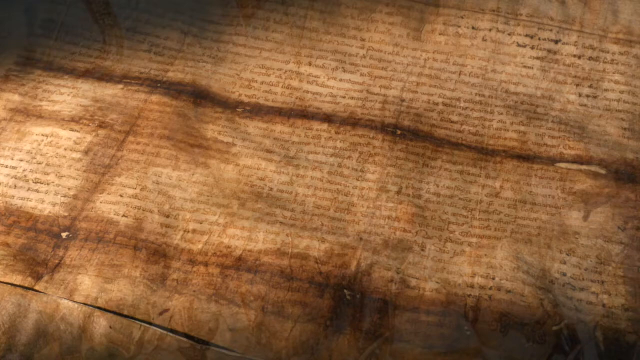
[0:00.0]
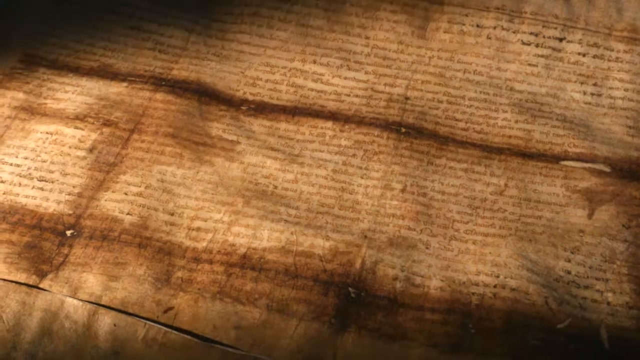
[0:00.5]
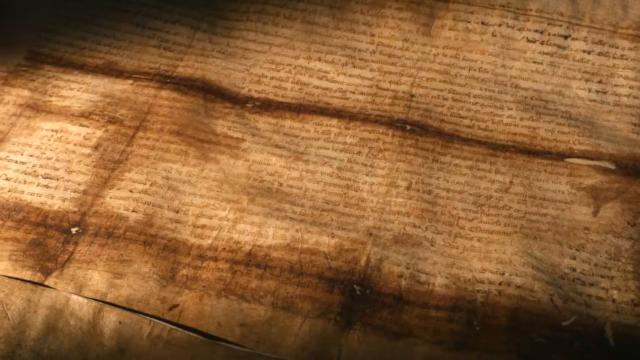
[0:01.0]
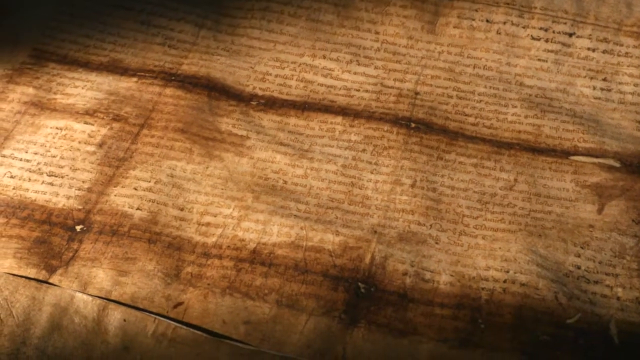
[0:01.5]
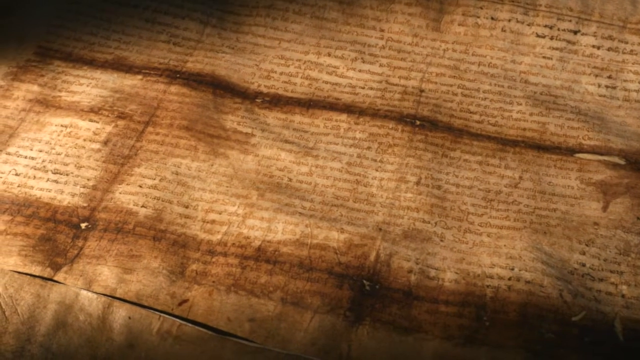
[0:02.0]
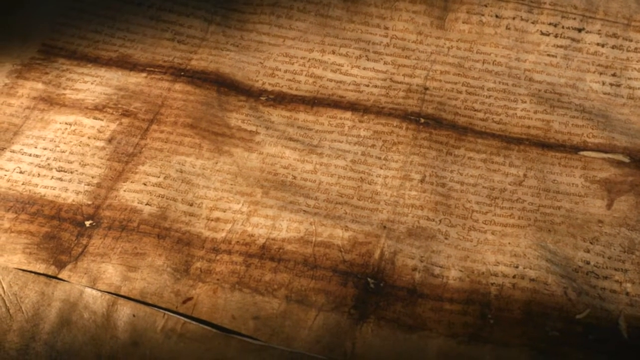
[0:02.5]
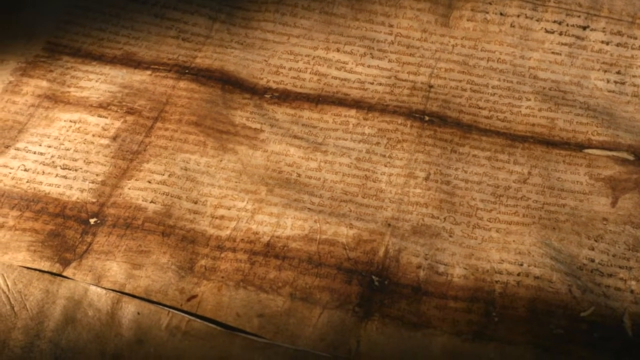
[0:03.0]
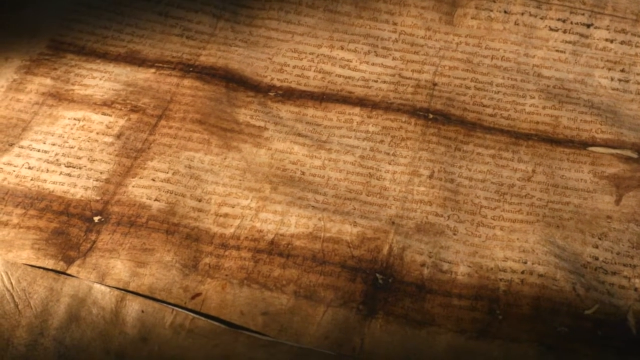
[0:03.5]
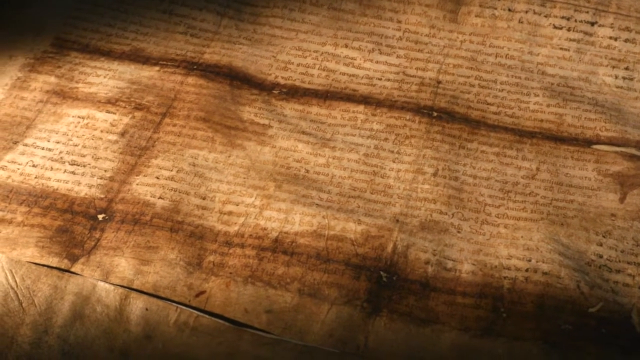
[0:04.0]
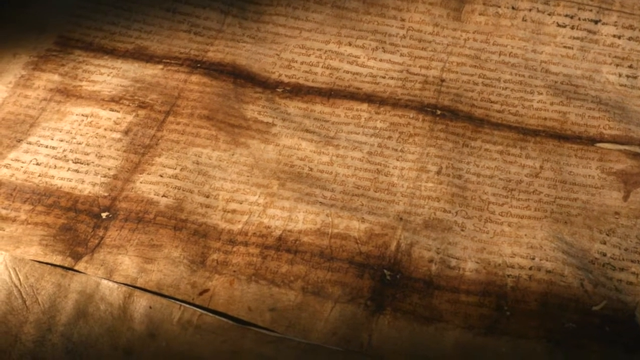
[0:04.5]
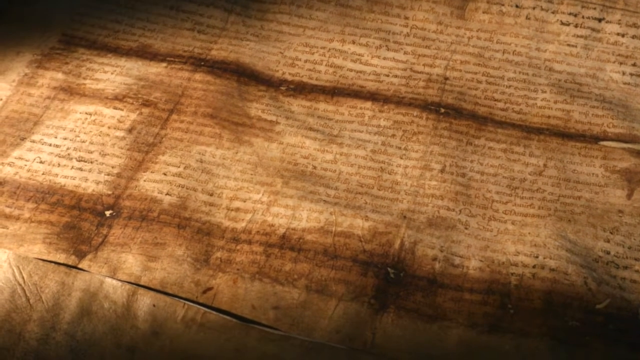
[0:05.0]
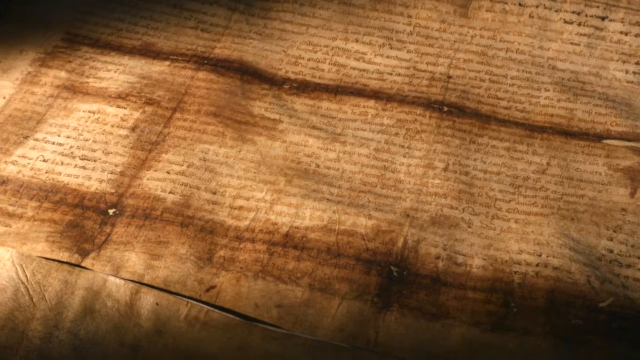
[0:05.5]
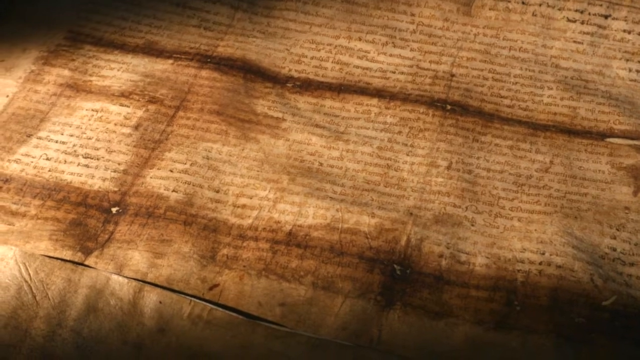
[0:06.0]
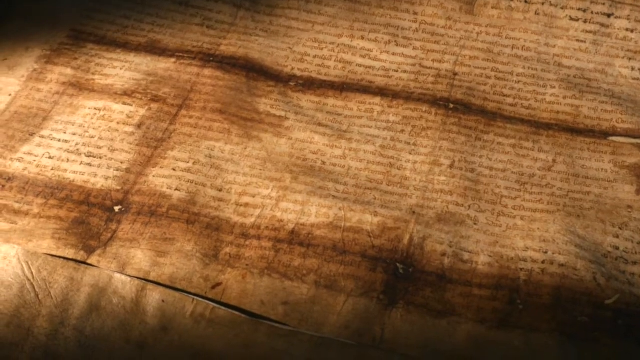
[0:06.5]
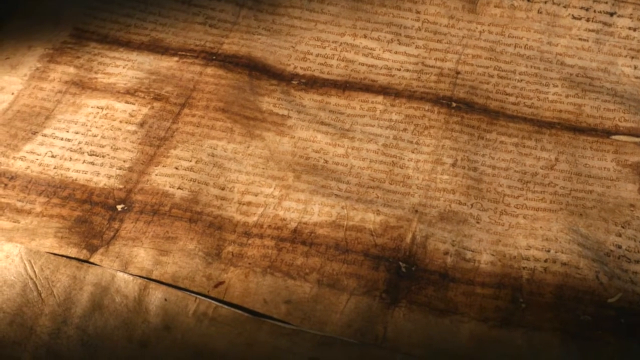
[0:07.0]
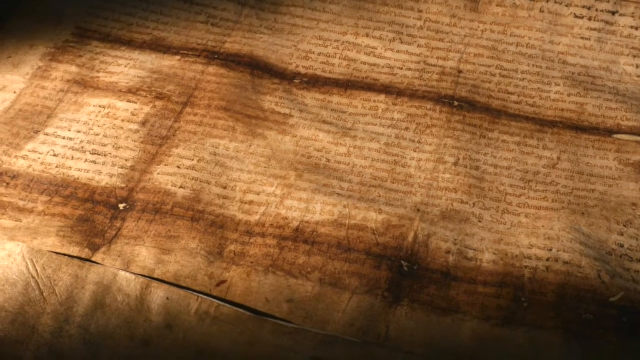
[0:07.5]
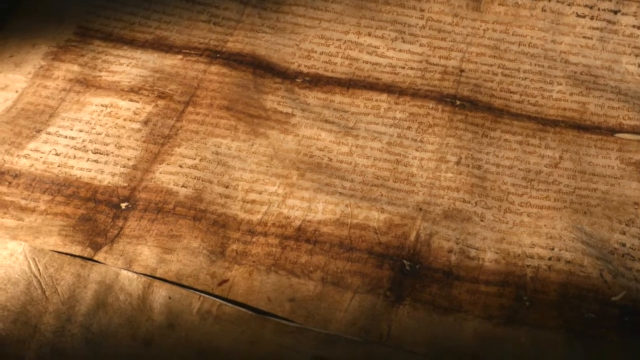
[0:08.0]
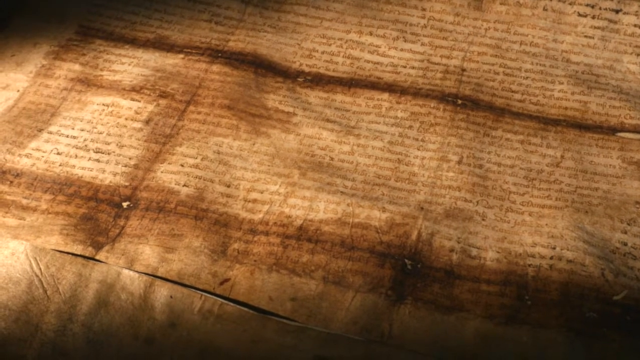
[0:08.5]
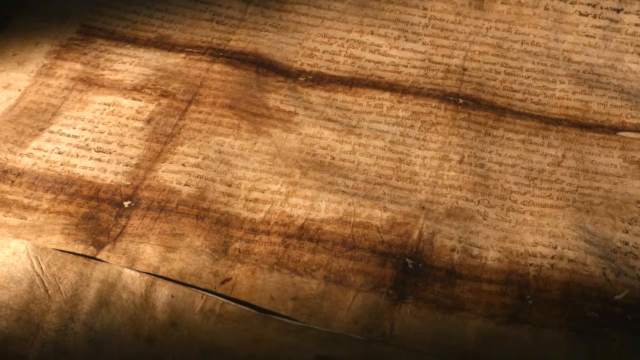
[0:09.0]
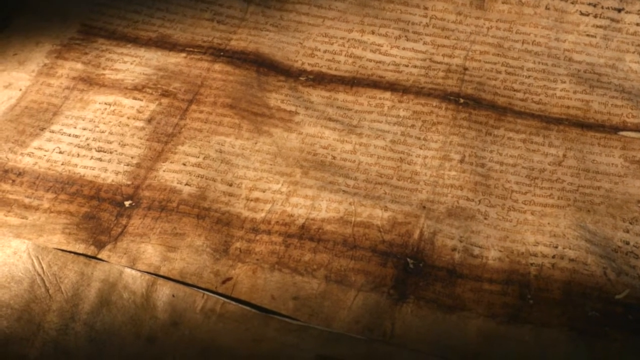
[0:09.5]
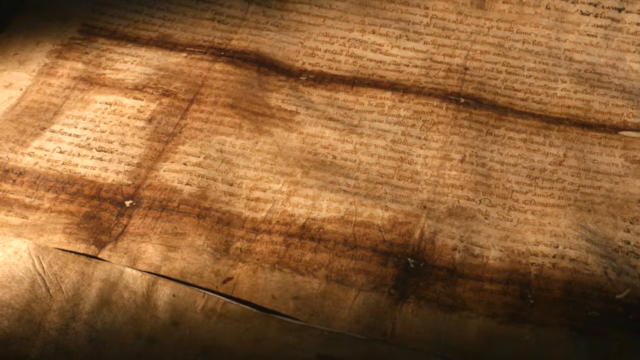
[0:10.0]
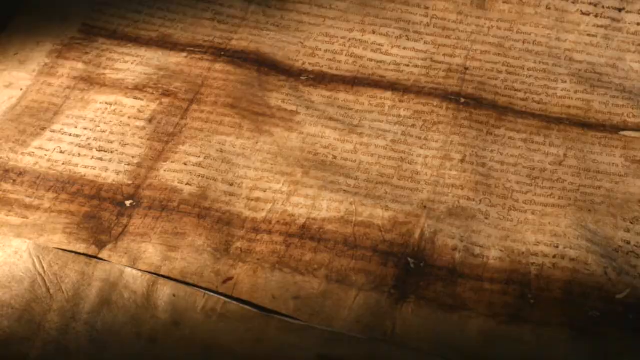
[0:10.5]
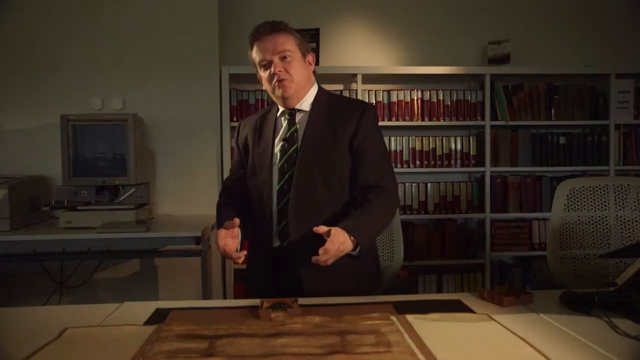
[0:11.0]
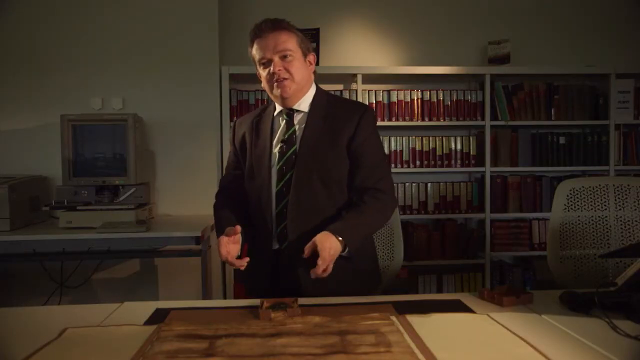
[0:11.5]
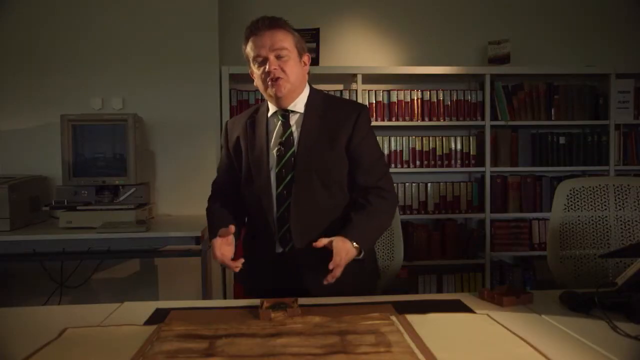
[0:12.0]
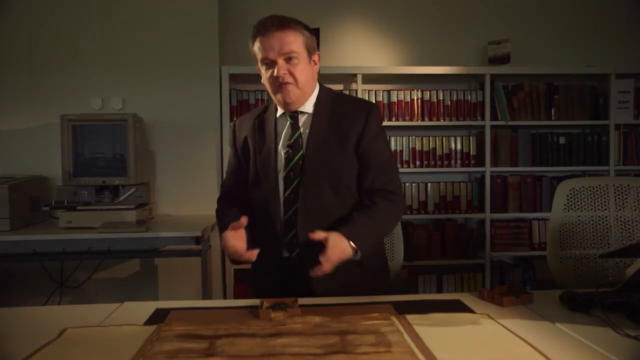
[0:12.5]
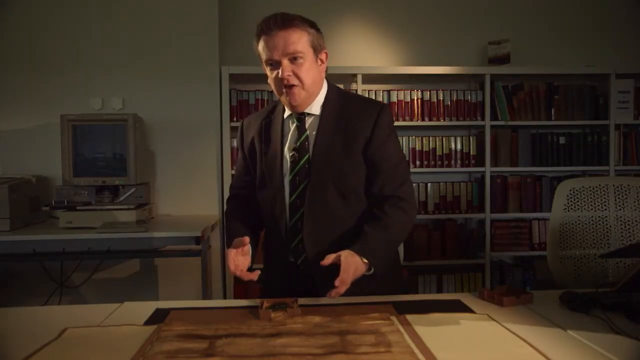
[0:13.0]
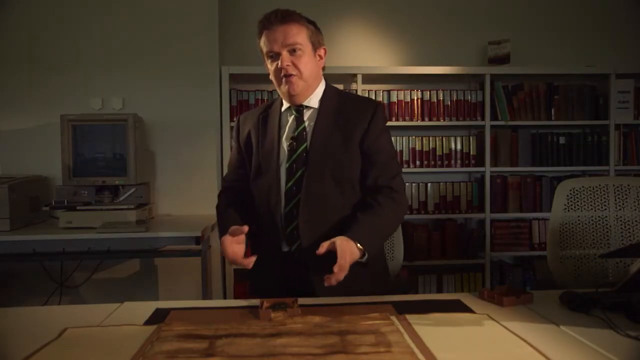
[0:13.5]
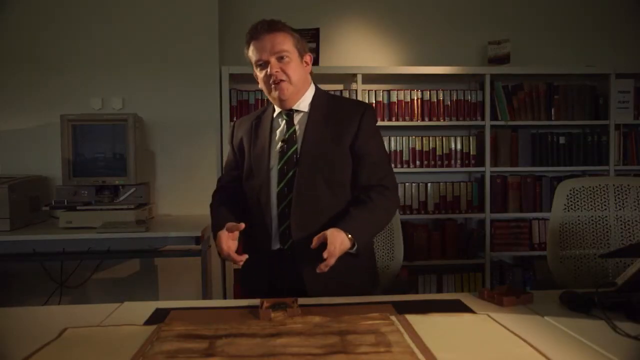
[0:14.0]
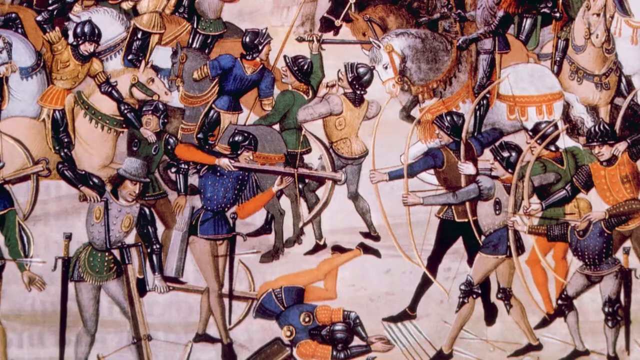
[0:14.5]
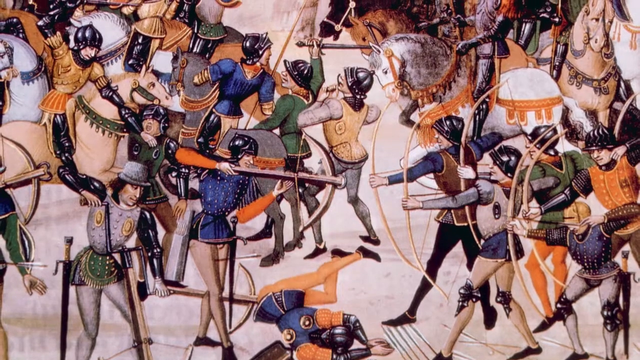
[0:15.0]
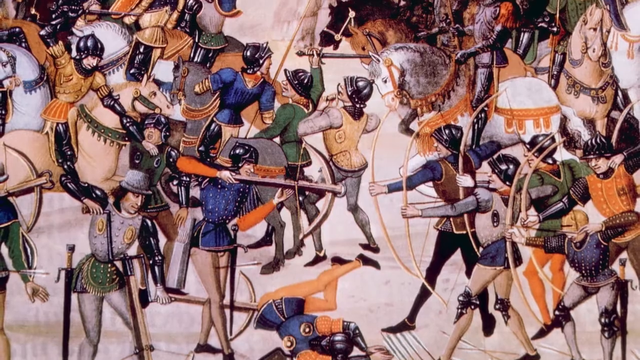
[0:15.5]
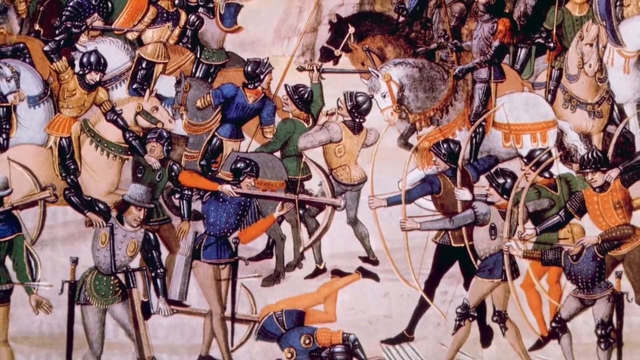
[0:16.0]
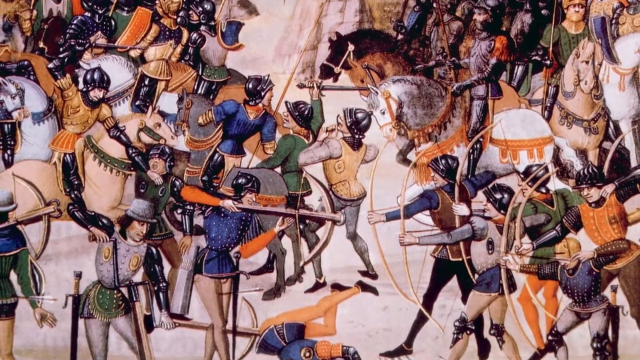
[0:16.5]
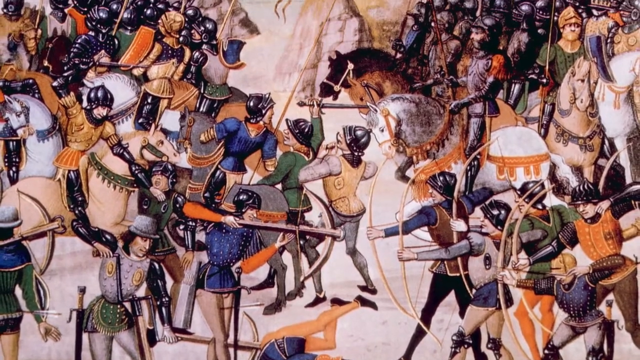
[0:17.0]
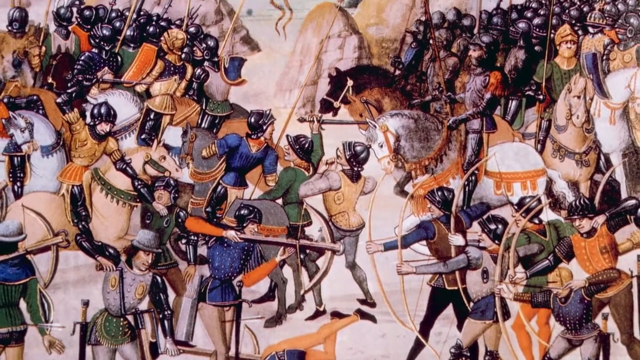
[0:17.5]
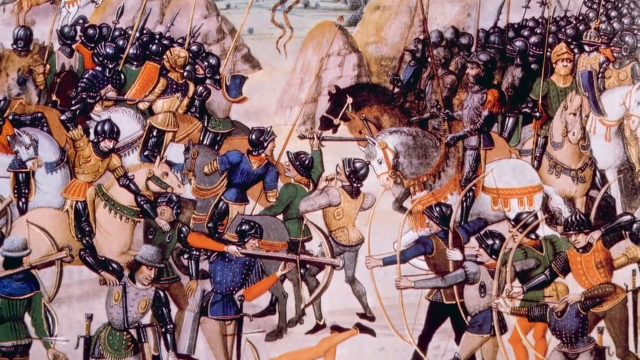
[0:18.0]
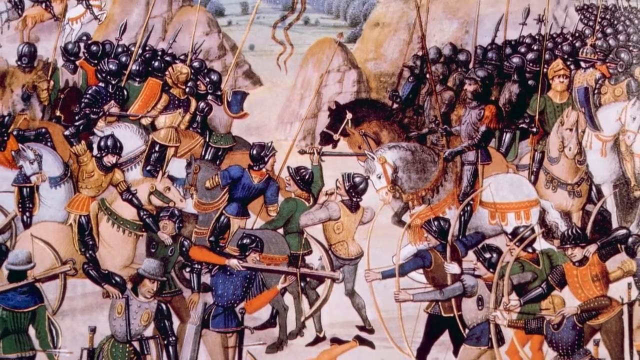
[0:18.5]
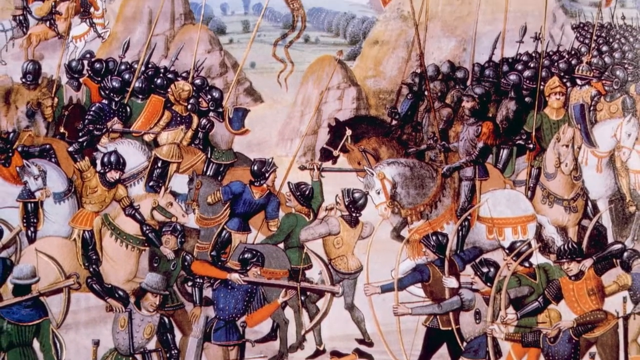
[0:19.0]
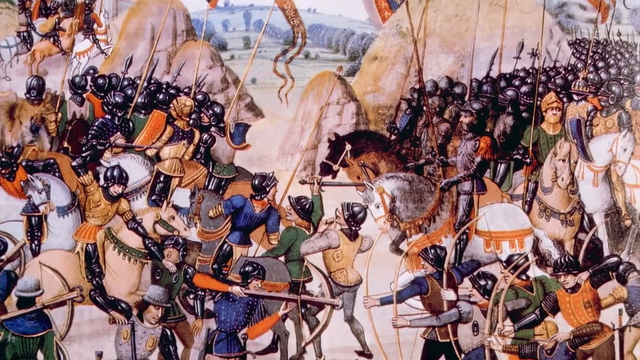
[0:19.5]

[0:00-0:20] A slow panning shot moves across a large parchment document covered in multiple lines of small, cursive handwritten wording, with darkened spots and stains where the document was once folded. The camera pans slowly from the top right toward the bottom left, revealing that the document is next to another similar parchment document. The video cuts to a man in a brown business suit, white dress shirt and a red and green striped tie, with a black microphone attached to his tie at the very top of the collar. He holds both hands in front of his waist with the palms facing each other in a claw-like pose, slowly wiggling his fingers as he moves his hands up and down and close together, motioning toward the document shown earlier. The video then cuts to a medieval painting of multiple soldiers in armor and helmets, some mounted and others using crossbows or longbows, fighting on a battlefield.